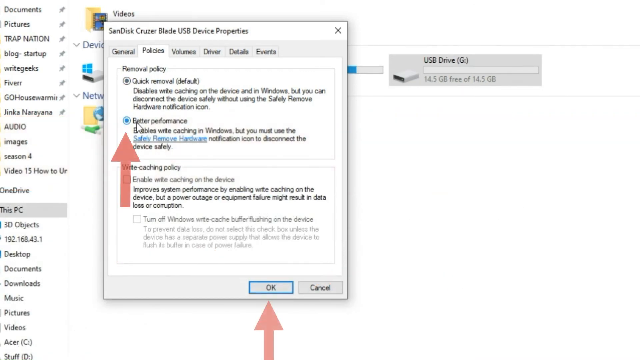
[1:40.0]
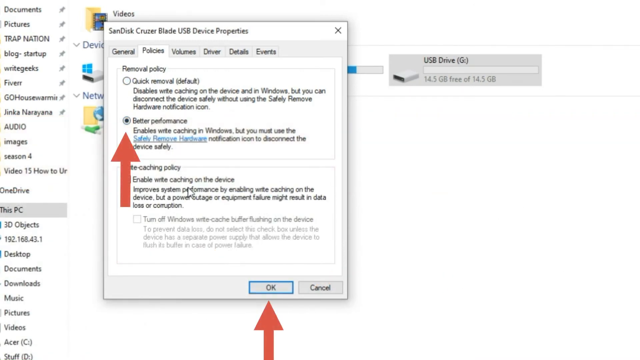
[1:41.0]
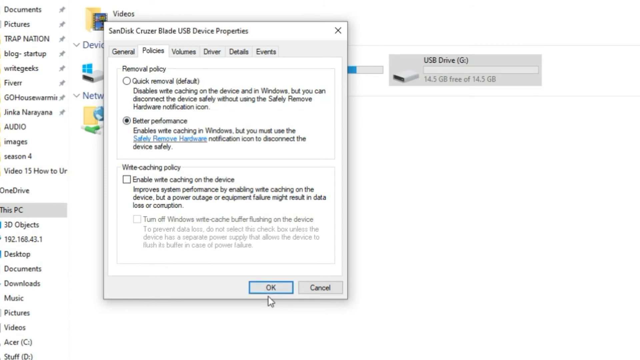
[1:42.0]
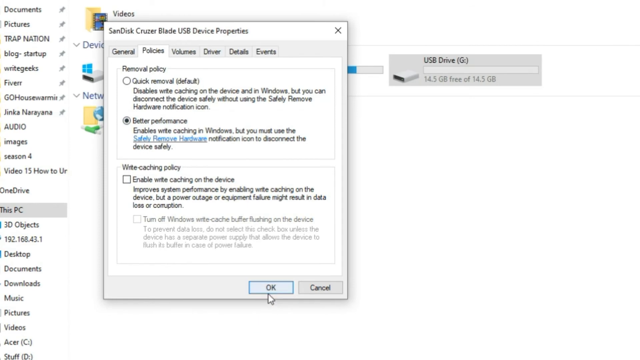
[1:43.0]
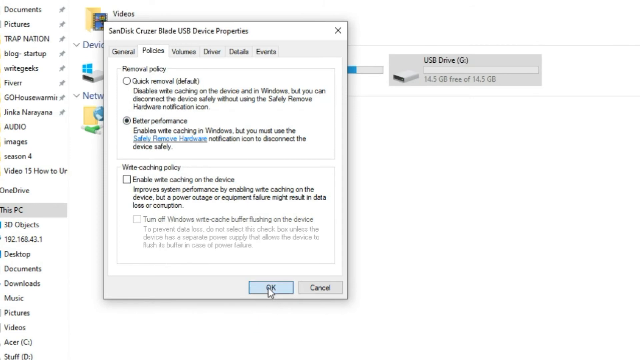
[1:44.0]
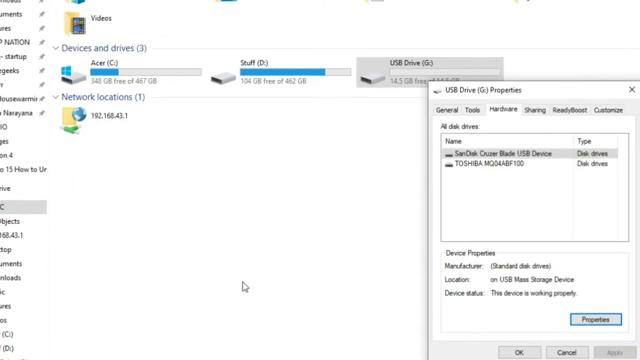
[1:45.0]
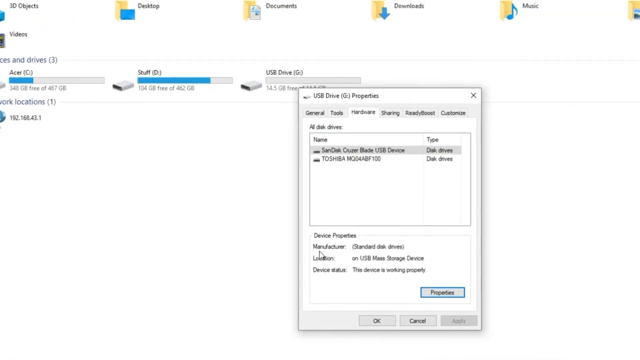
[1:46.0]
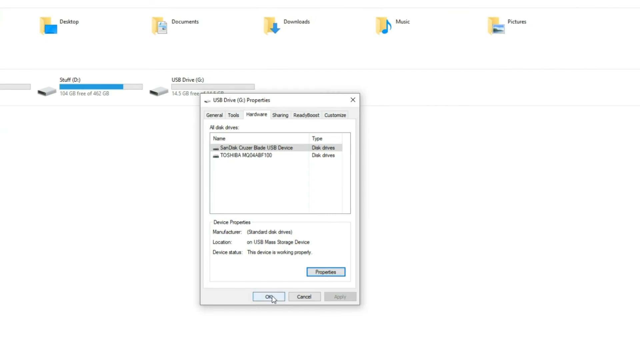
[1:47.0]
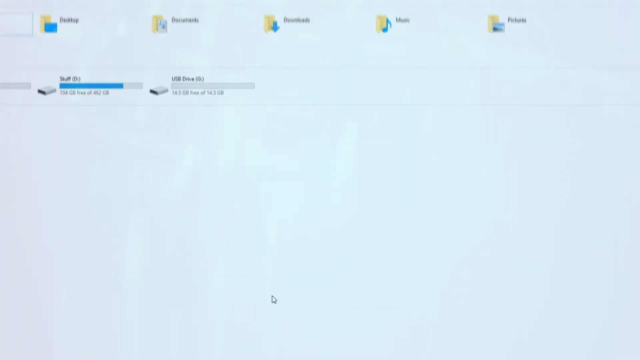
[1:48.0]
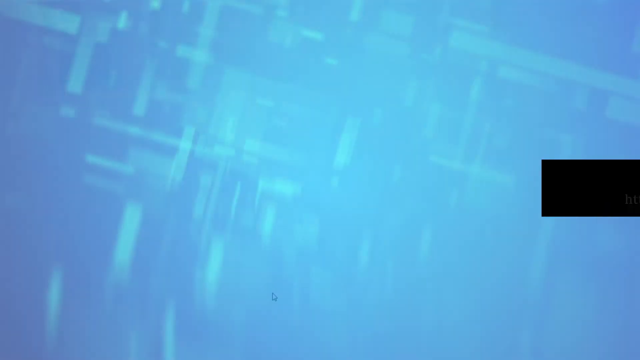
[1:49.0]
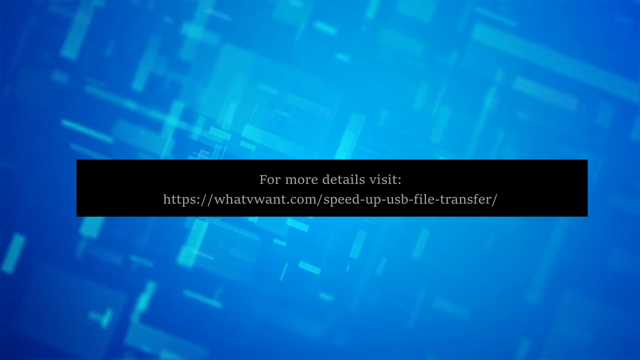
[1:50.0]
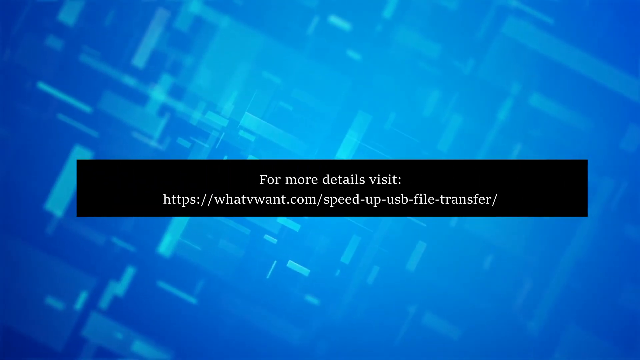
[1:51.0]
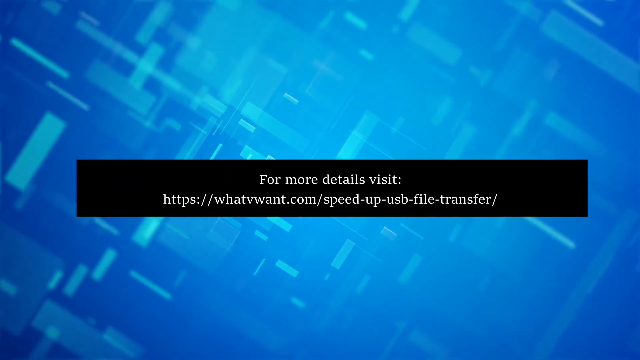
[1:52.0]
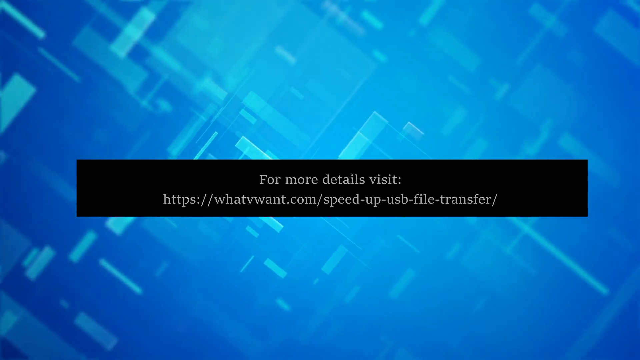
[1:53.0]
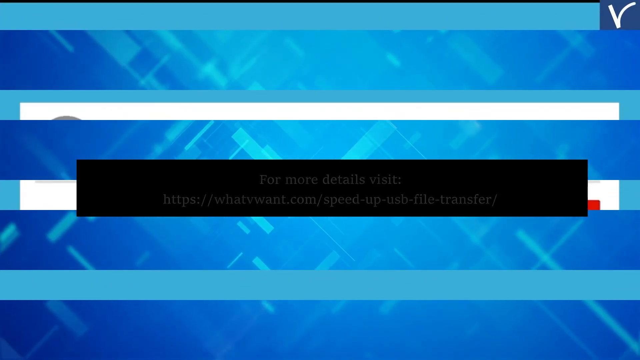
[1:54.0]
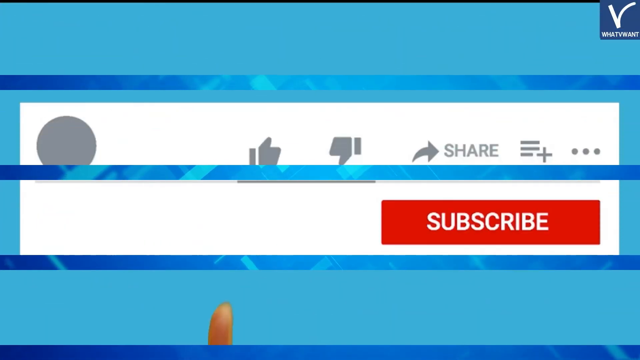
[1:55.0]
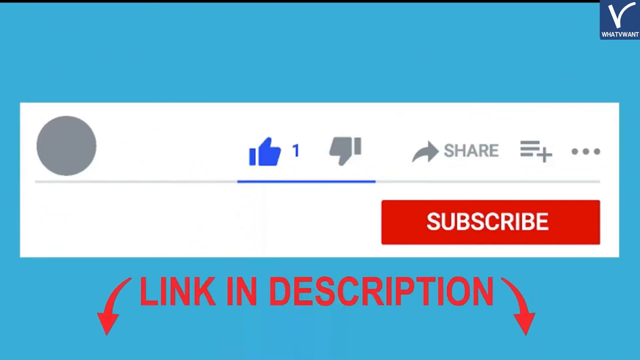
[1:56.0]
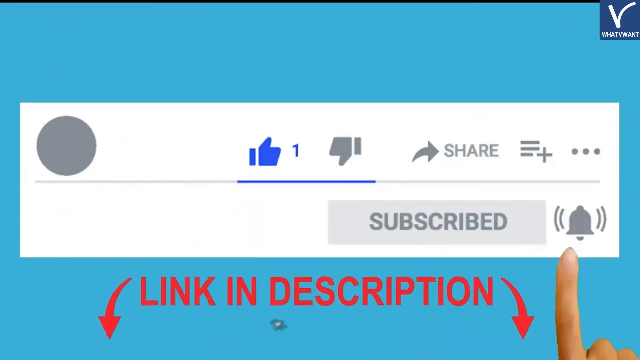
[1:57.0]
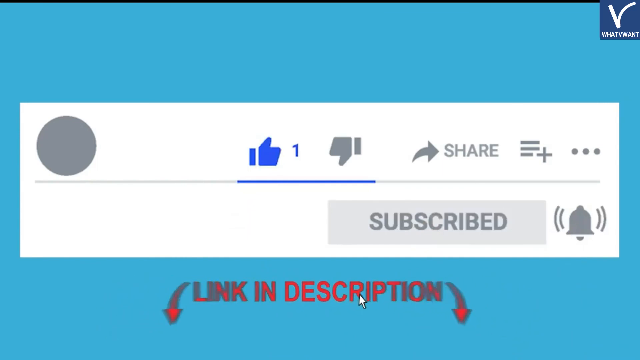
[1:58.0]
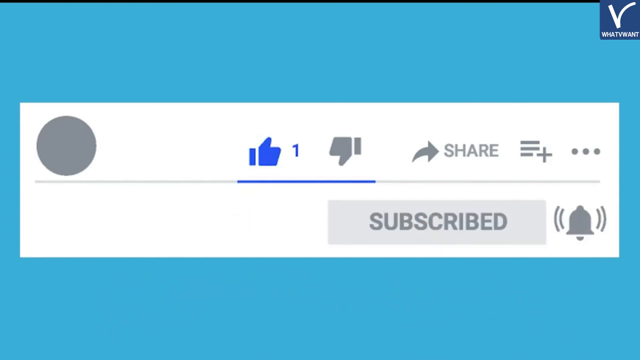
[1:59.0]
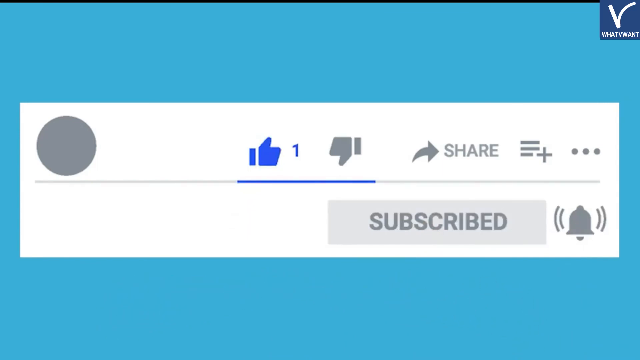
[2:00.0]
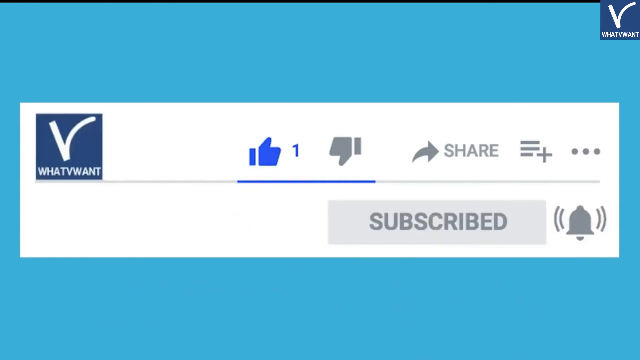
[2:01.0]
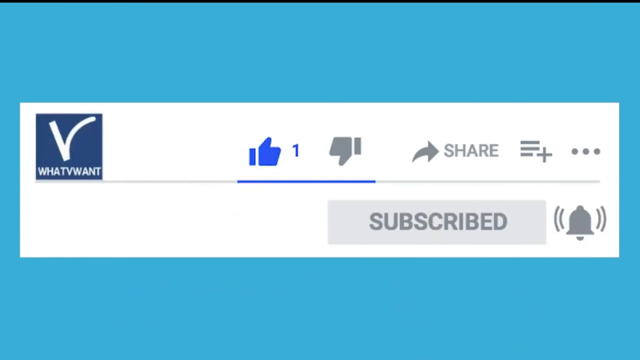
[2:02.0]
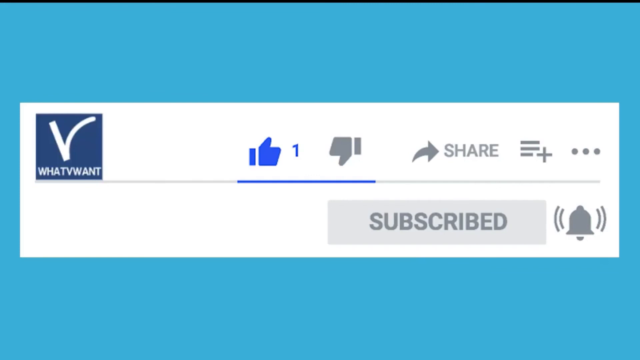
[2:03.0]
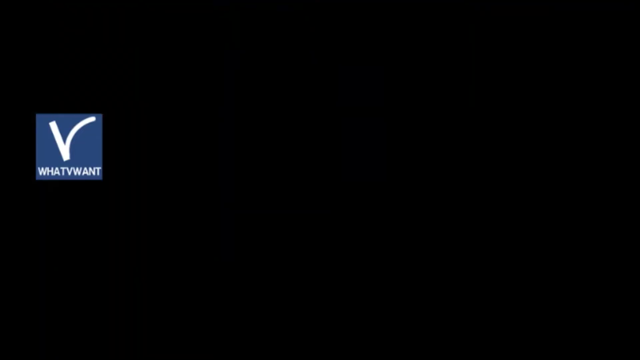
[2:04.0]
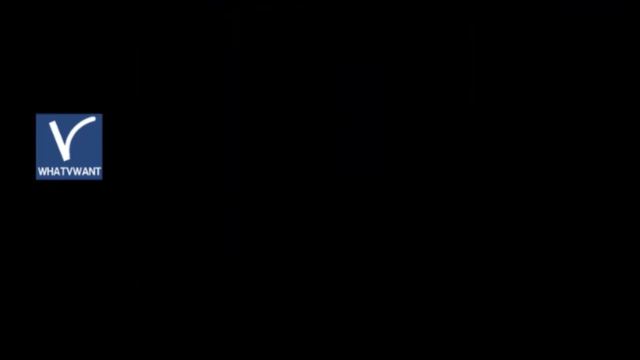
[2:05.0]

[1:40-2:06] Text about better performance appears, followed by "For more details visit HTTPS What V want," along with a like and subscribe prompt and a note about a link in the description. He seems to go back through where he was. The moving background is blue with some lighter colors, and a fake hand points to the like, subscribe and notify buttons.